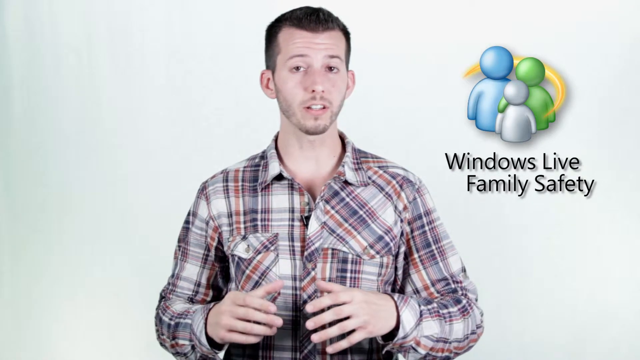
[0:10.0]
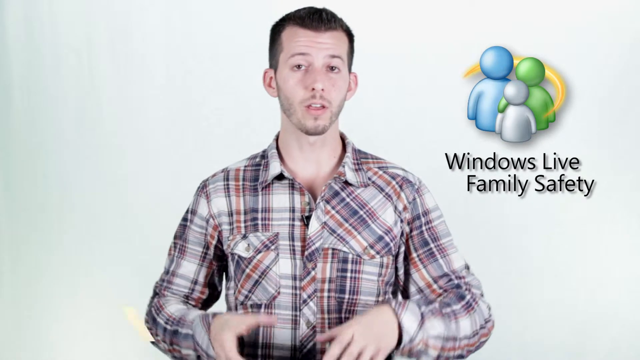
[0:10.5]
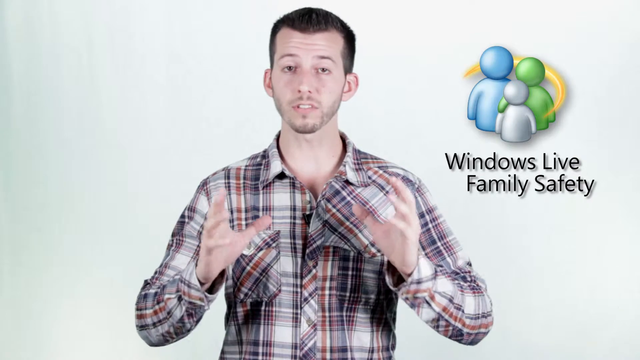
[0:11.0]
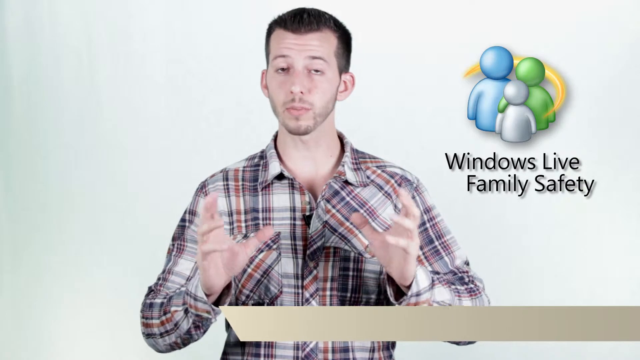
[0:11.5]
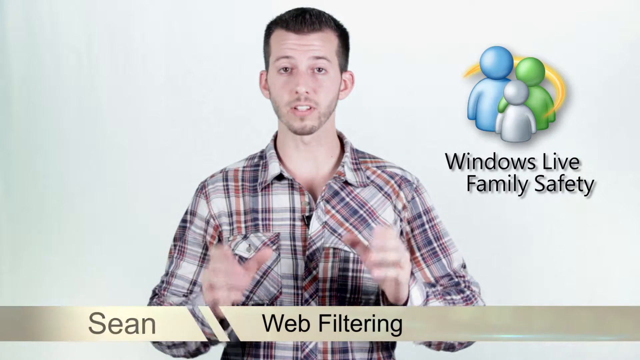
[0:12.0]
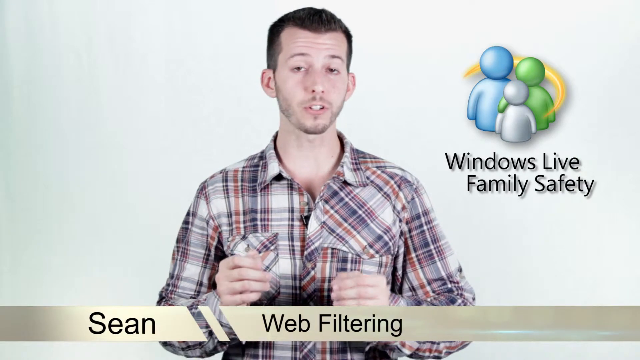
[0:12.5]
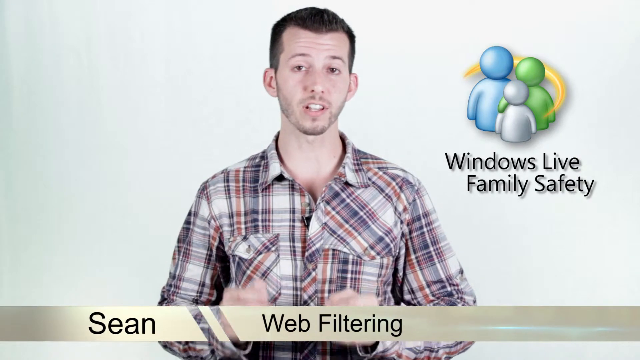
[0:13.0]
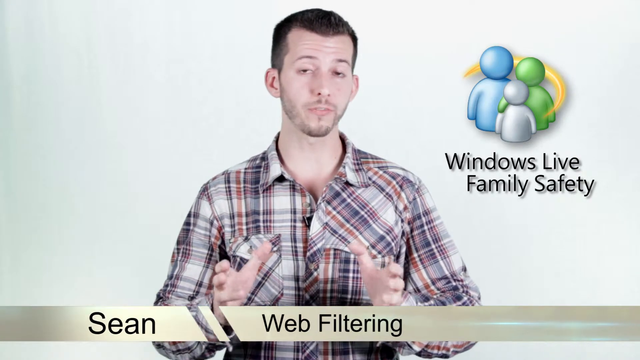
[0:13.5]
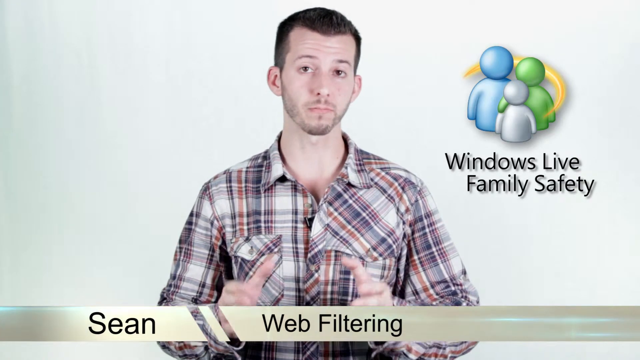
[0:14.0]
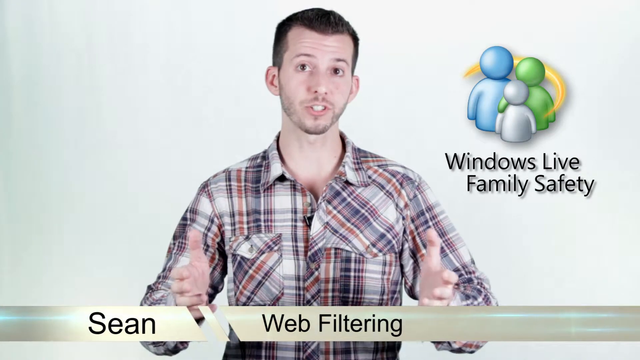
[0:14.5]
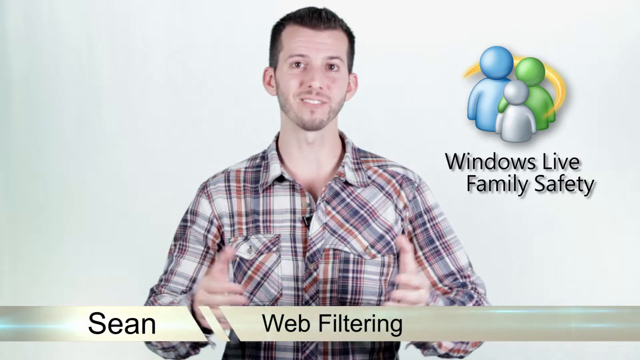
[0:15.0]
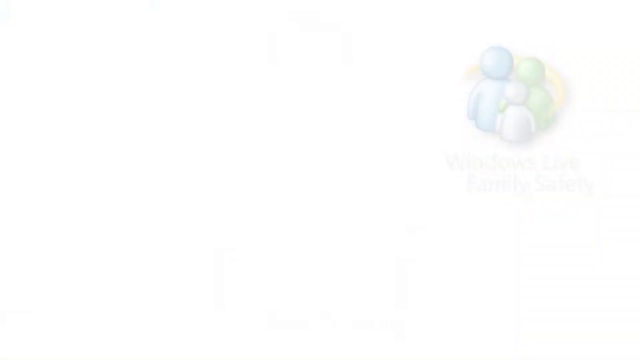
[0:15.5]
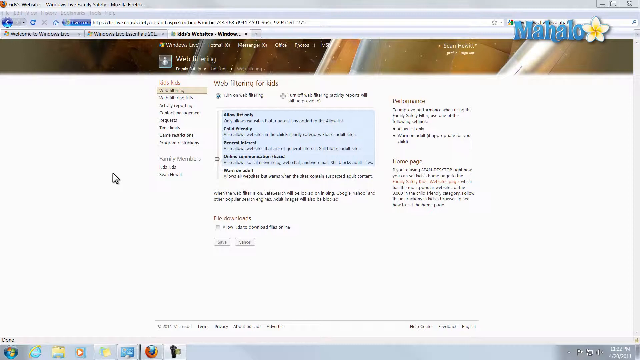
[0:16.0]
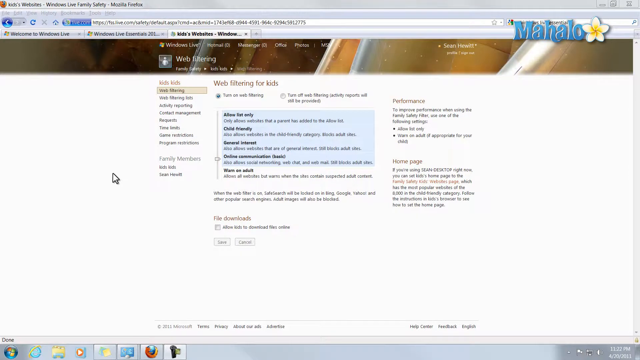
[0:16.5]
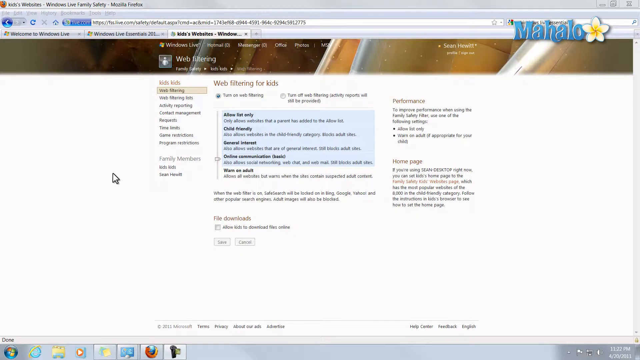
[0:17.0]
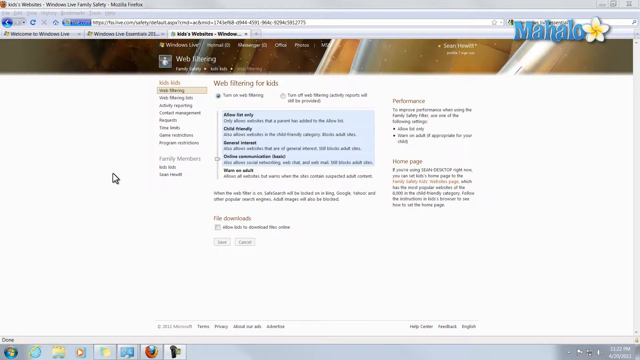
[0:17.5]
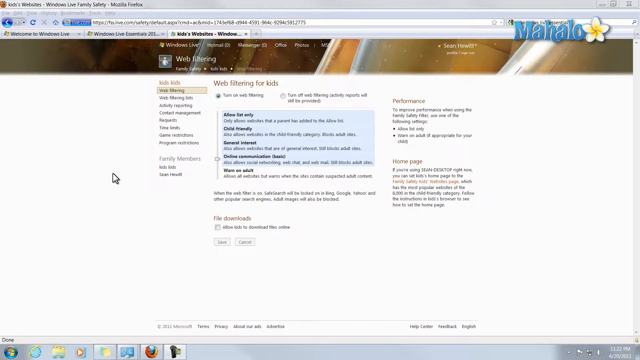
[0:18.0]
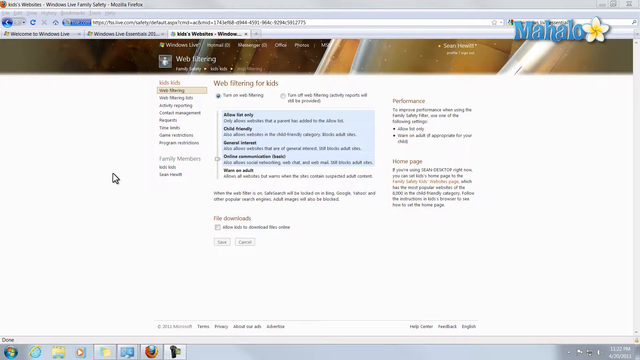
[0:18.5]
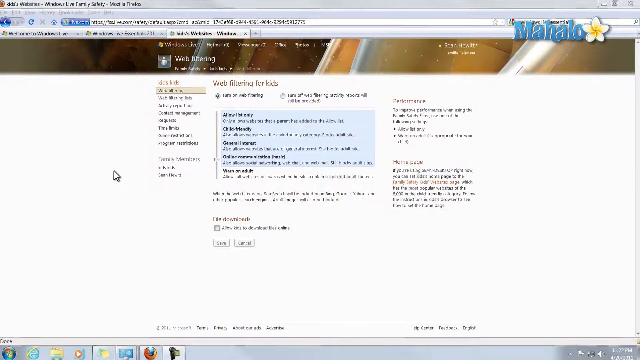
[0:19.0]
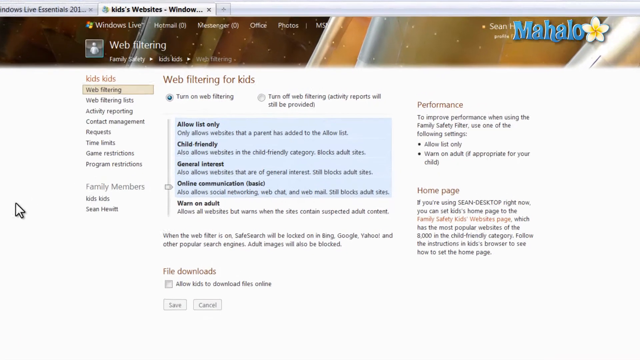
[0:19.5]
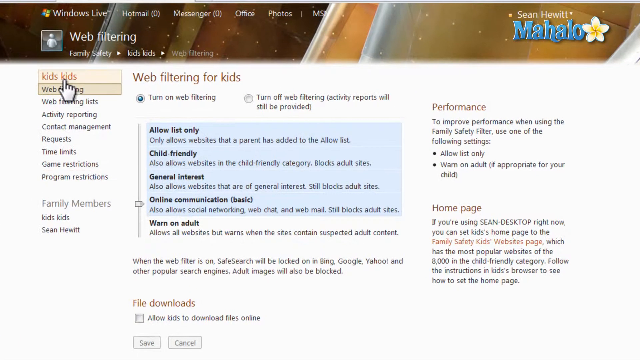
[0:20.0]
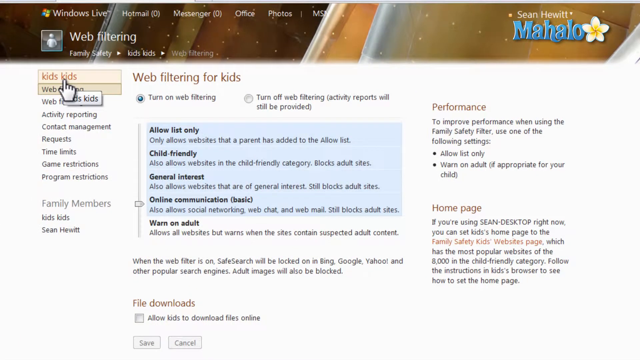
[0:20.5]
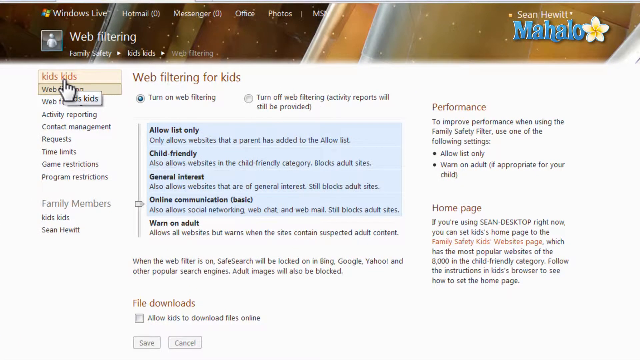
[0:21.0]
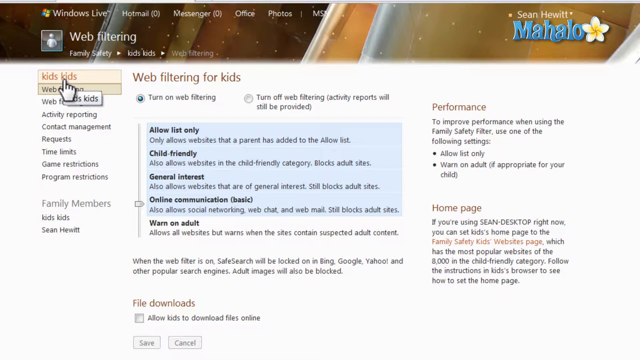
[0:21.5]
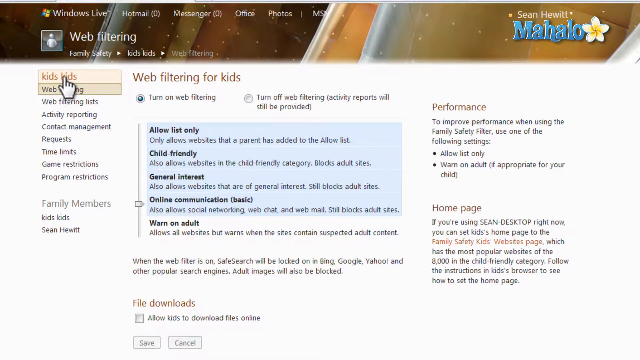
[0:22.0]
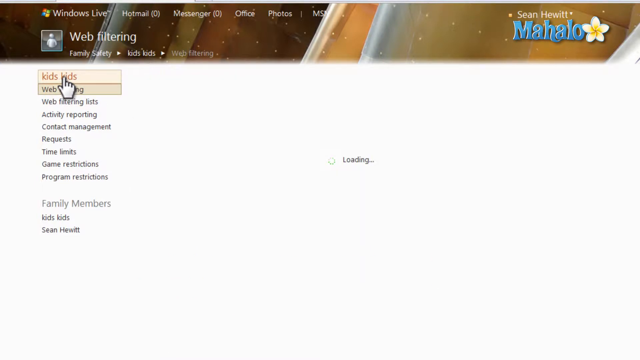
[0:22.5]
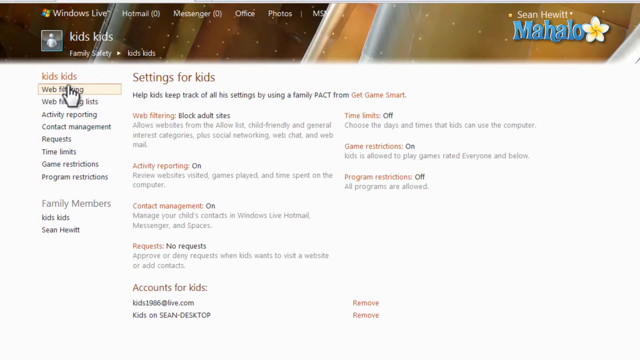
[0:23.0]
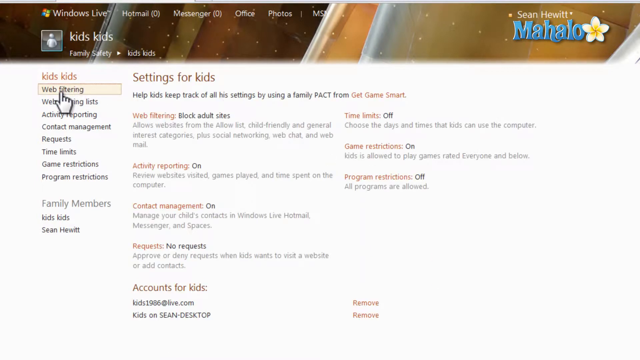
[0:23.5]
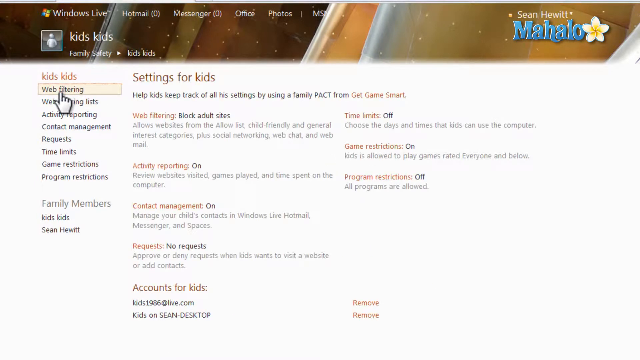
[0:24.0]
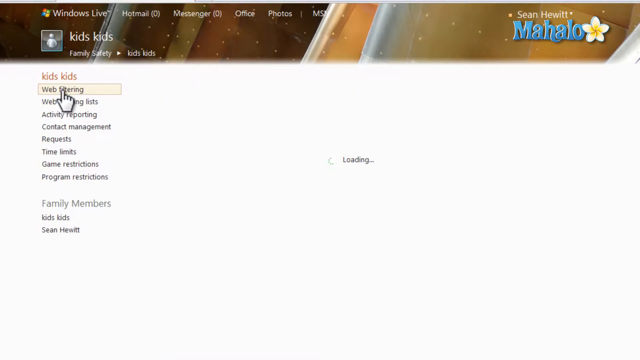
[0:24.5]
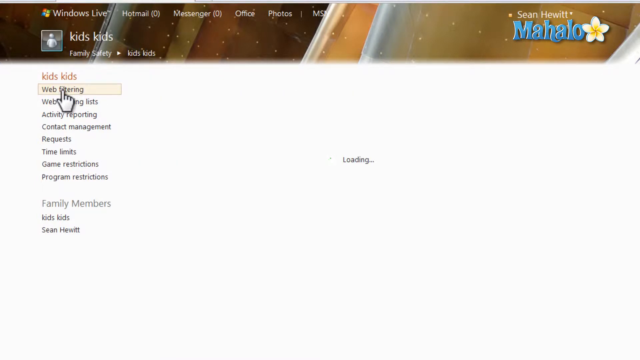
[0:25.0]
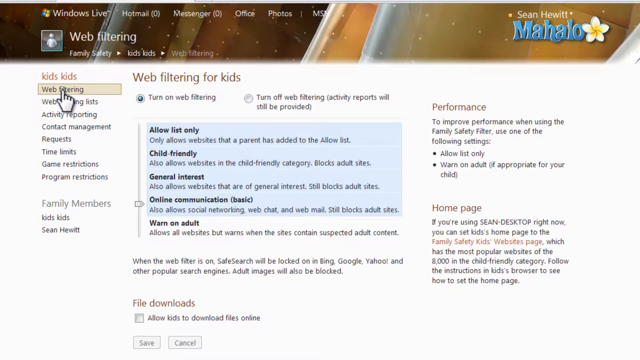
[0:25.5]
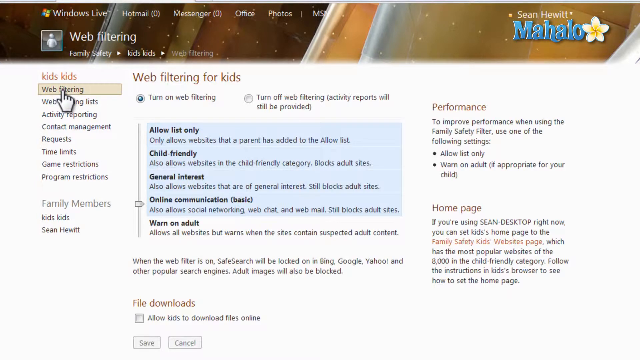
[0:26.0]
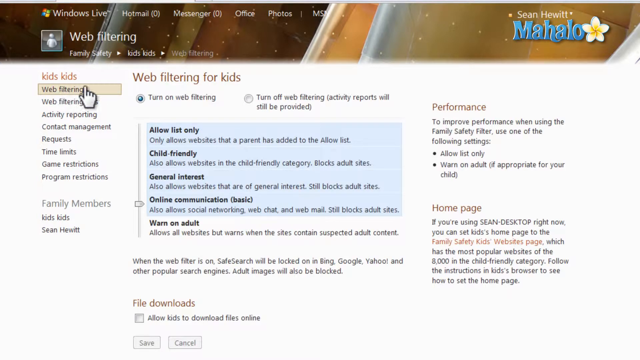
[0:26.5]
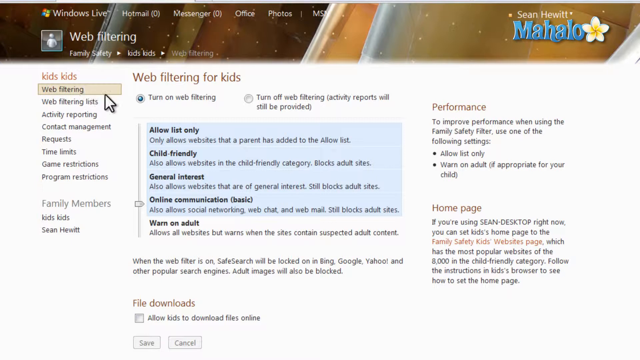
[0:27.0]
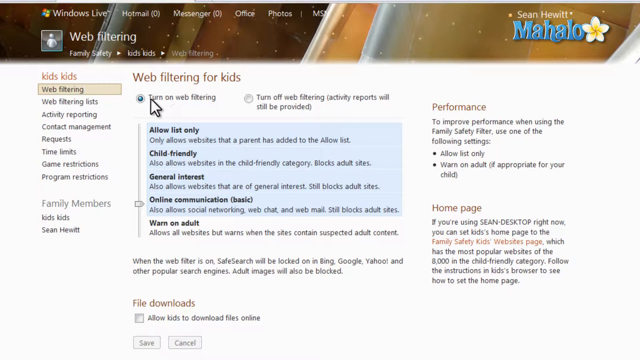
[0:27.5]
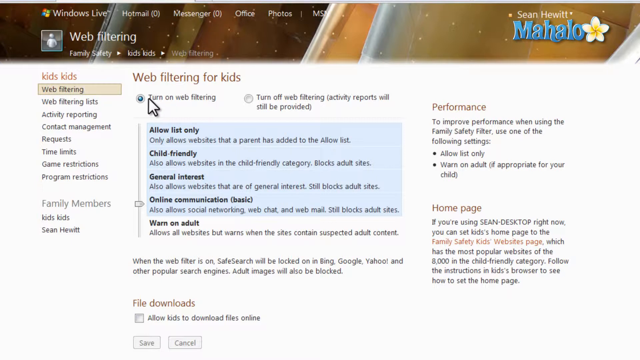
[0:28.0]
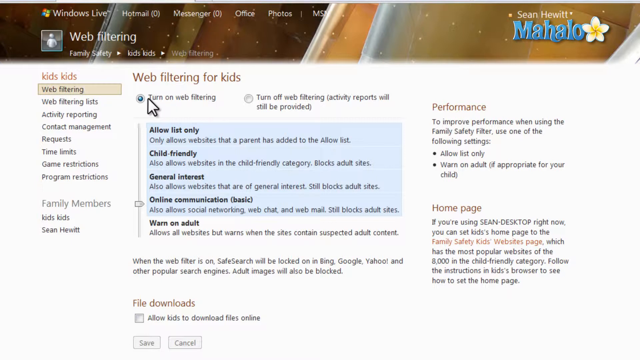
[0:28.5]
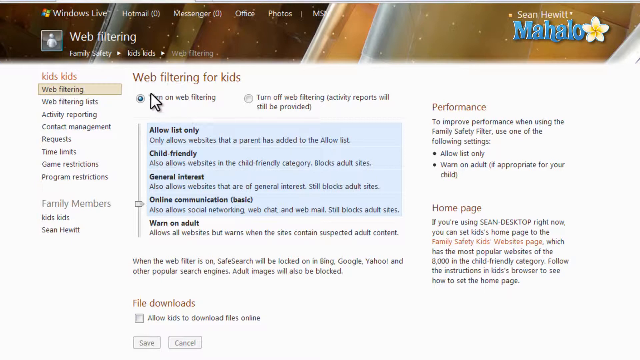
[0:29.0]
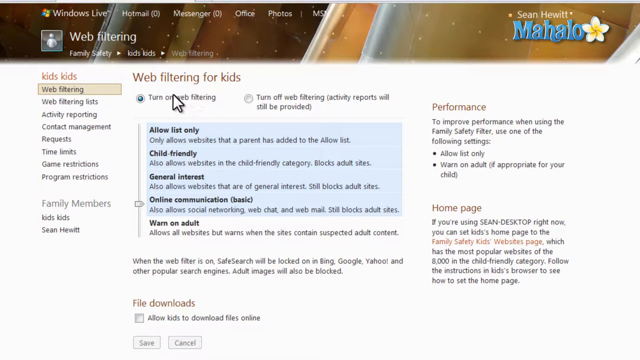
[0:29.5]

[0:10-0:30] The background is a slightly off-white, almost grayish tint rather than yellowish. The man has very short stubble and only a little facial hair, including a slight mustache and a bit of five o'clock shadow, and a somewhat long neck. His hair has a slight widow's peak, with the hairline going up a little on the left and right sides, and he has brown eyes. While speaking he holds his hands up more, open-handed out in front of him, shaking his hands with open palms. Text reading "sean web filtering" appears underneath him, with double diagonal cut lines popping up between the two words. The video then goes to a website, apparently from Mozilla, possibly reading "kids websites", showing web filtering for kids. A left-hand column lists various functions that are a little hard to read; "web filtering" is apparently highlighted in yellow to show it is the current page. In the middle, right underneath "web filtering for kids", a blue box lists options such as "allow list only". The view zooms in and the cursor moves over "kids kids", which he apparently clicks; the item underneath reads "web filtering". To the right, different options are shown, such as blocking adult sites and activity reporting. He then goes back to web filtering for kids, where a blue option button, "turn on web filtering", is currently selected, with an option to its right for turning off web filtering. The cursor circles around the pre-selected option.